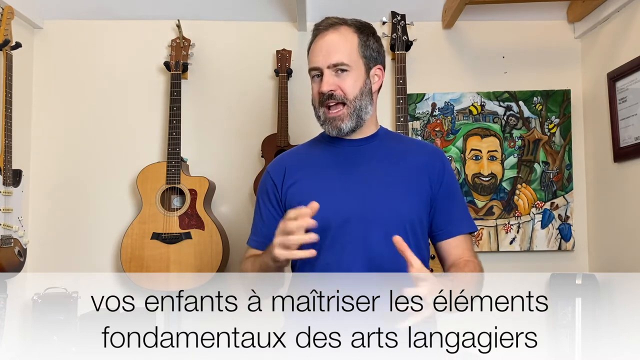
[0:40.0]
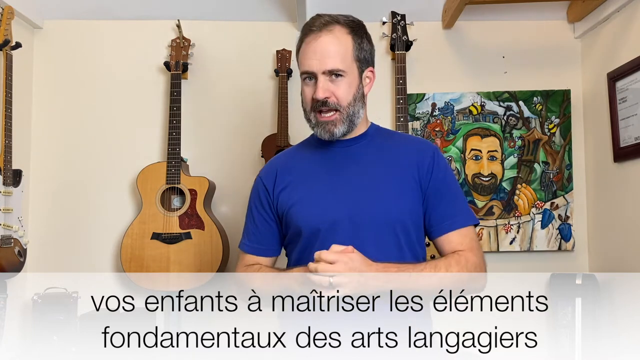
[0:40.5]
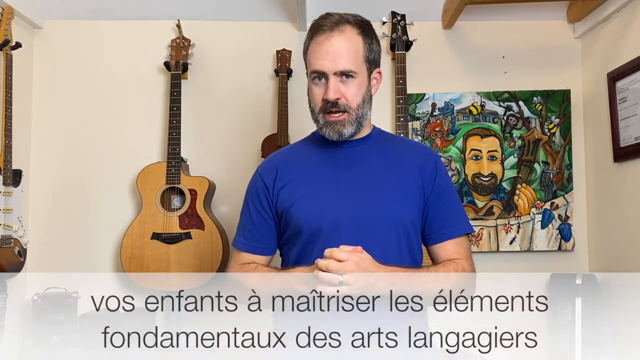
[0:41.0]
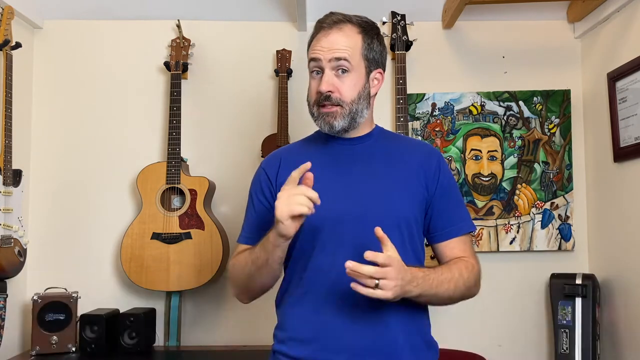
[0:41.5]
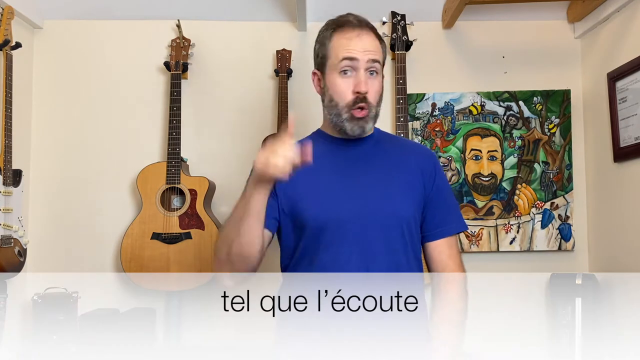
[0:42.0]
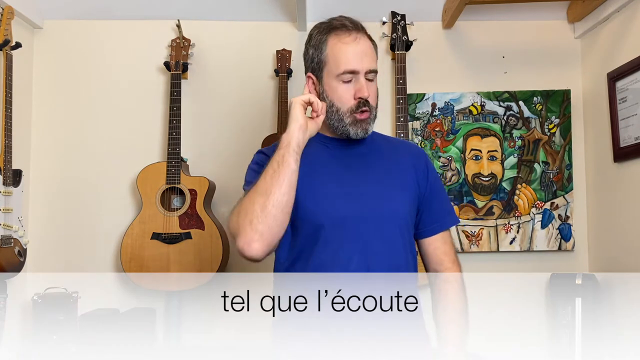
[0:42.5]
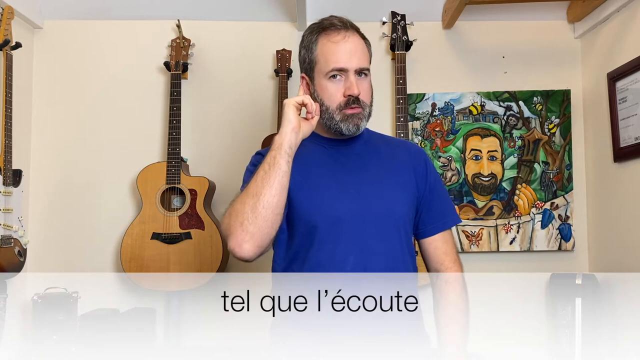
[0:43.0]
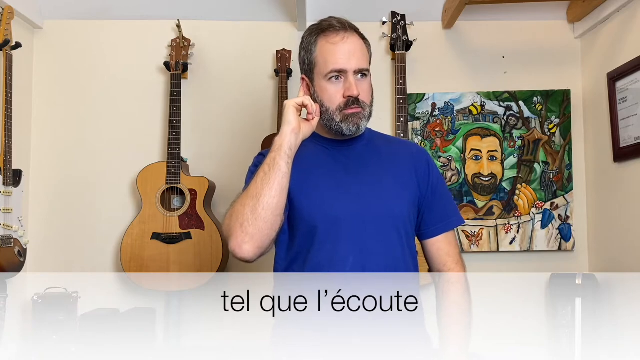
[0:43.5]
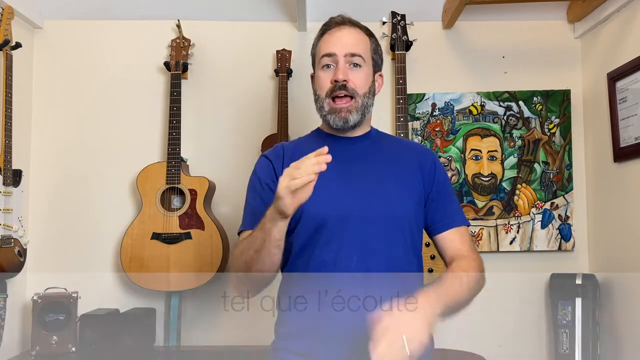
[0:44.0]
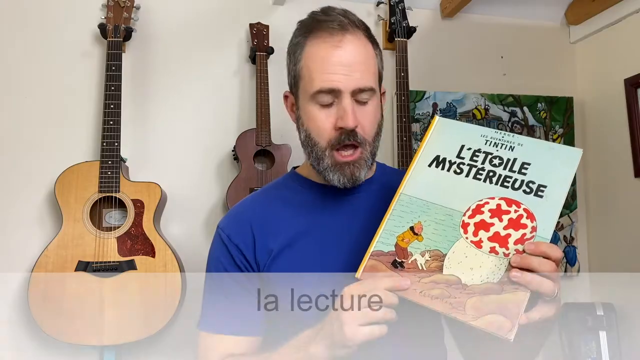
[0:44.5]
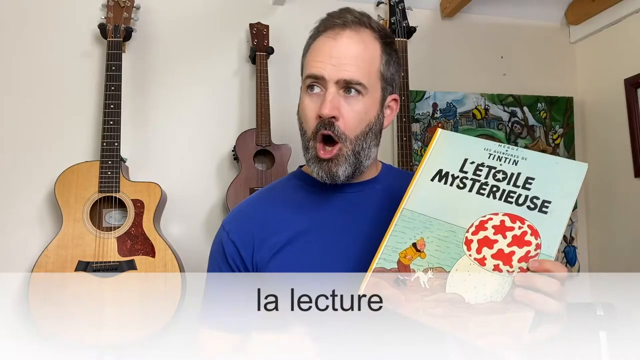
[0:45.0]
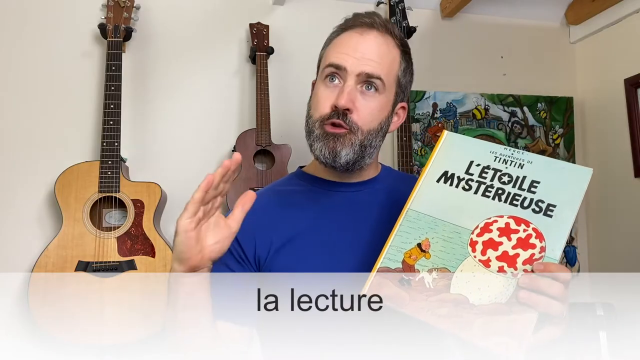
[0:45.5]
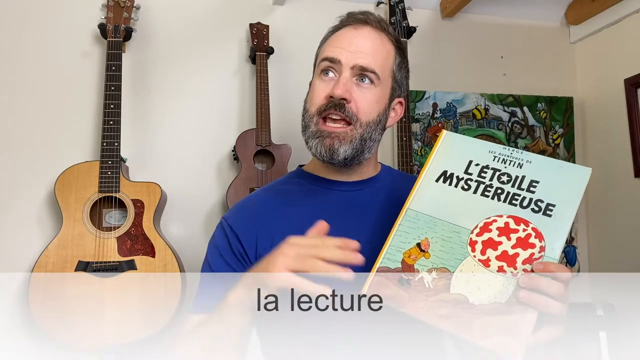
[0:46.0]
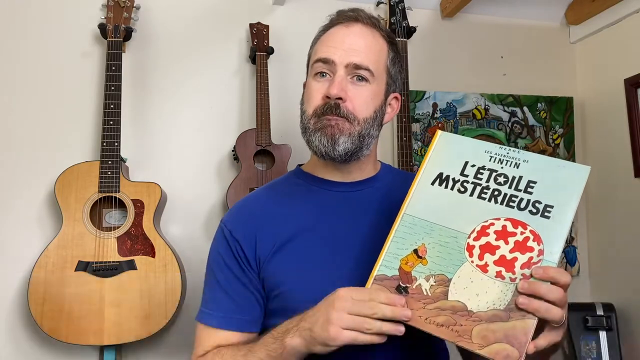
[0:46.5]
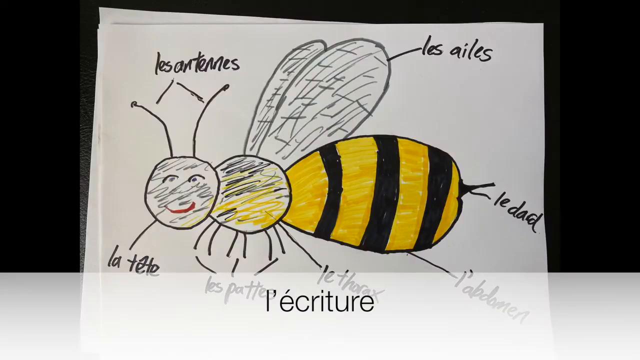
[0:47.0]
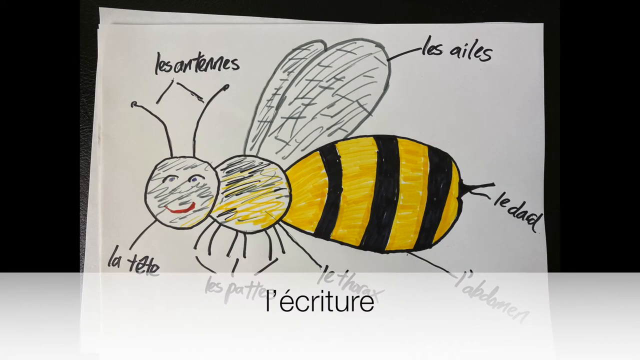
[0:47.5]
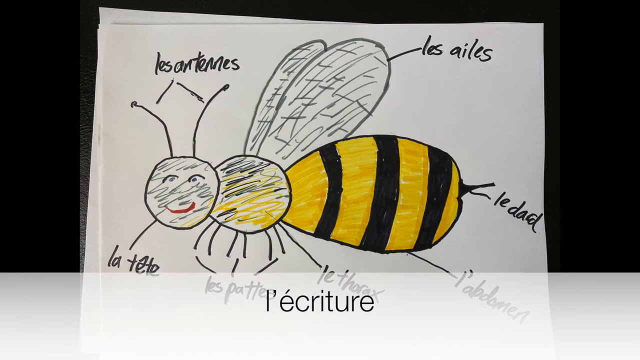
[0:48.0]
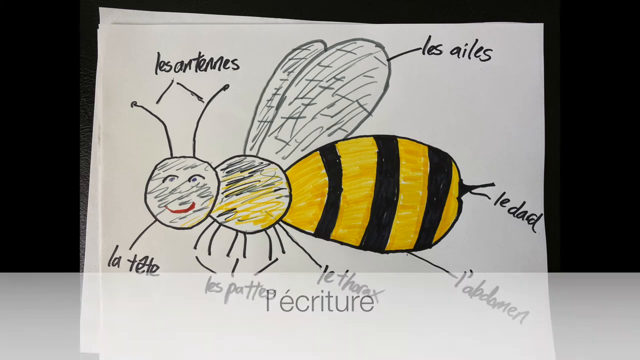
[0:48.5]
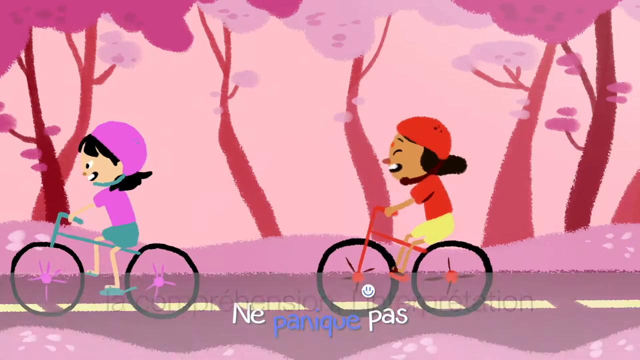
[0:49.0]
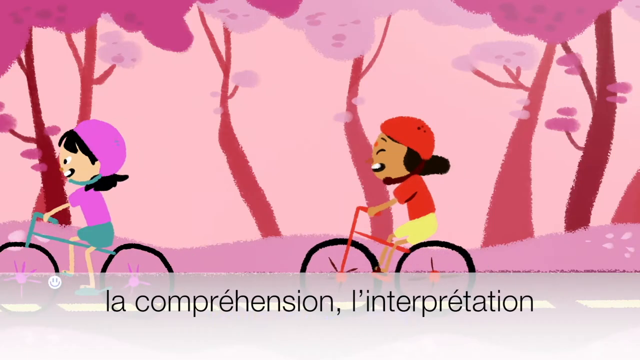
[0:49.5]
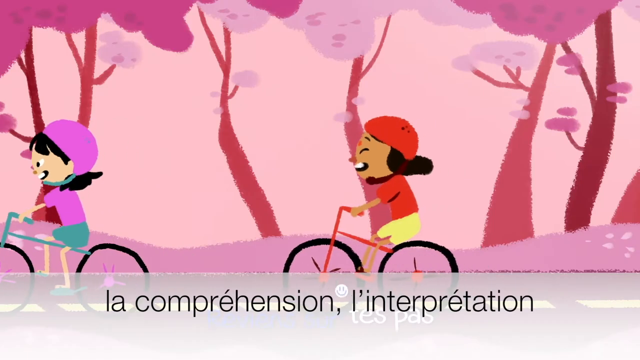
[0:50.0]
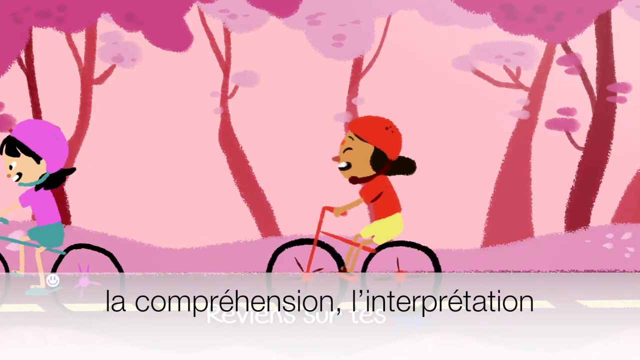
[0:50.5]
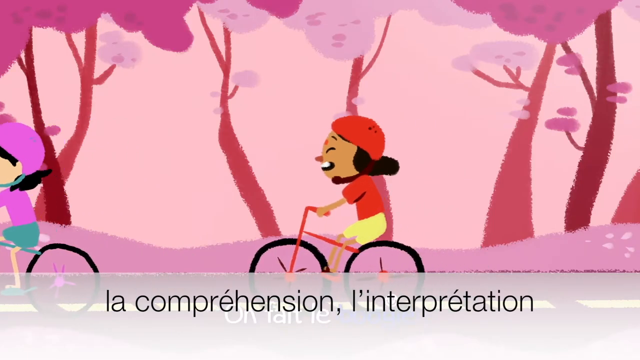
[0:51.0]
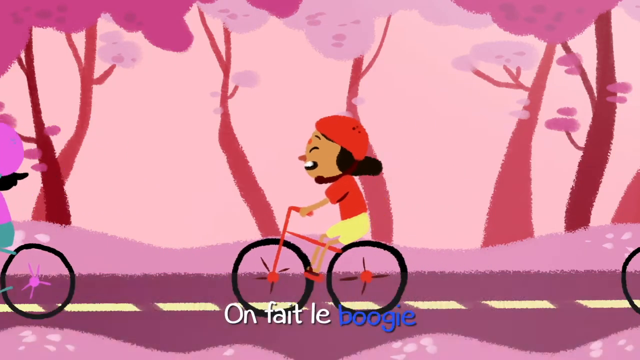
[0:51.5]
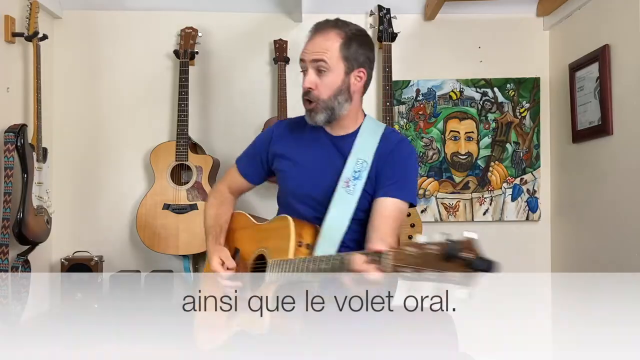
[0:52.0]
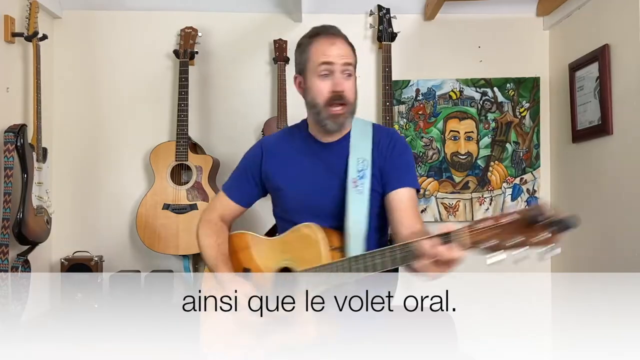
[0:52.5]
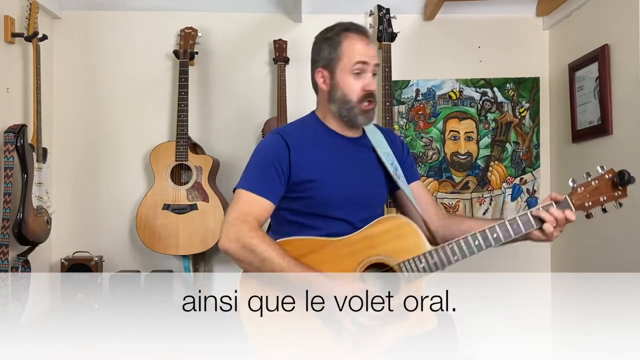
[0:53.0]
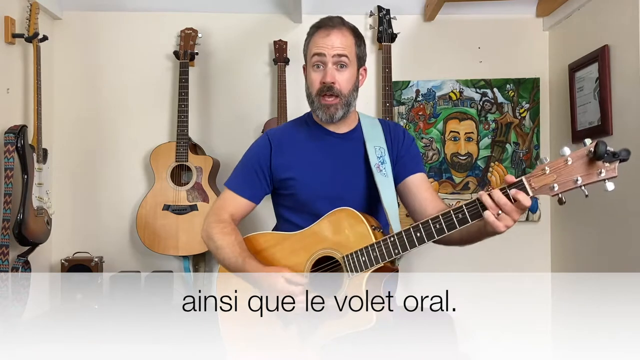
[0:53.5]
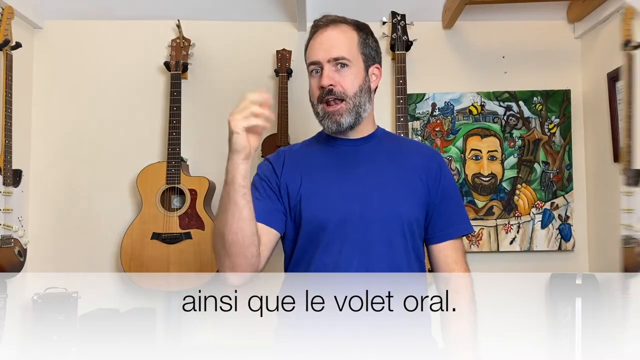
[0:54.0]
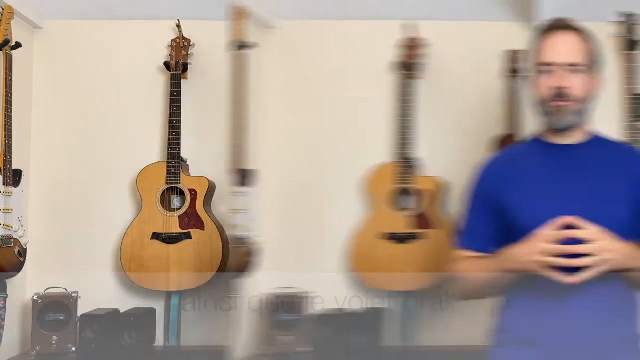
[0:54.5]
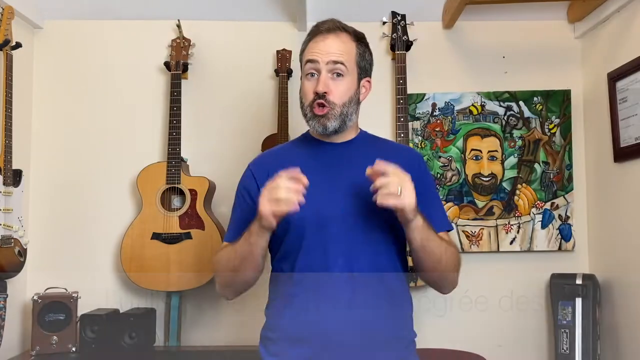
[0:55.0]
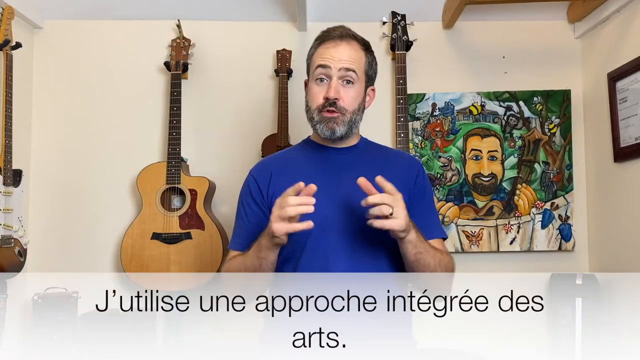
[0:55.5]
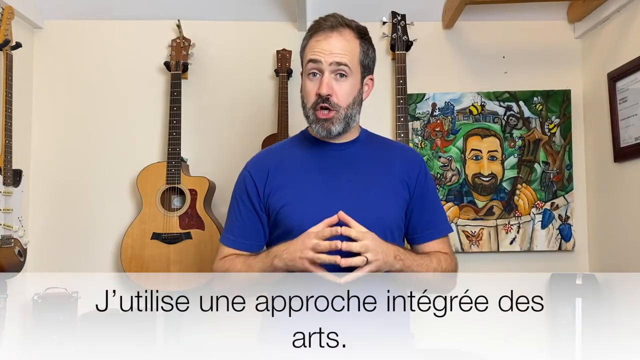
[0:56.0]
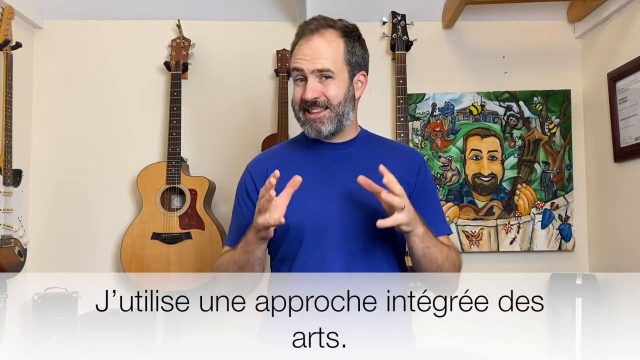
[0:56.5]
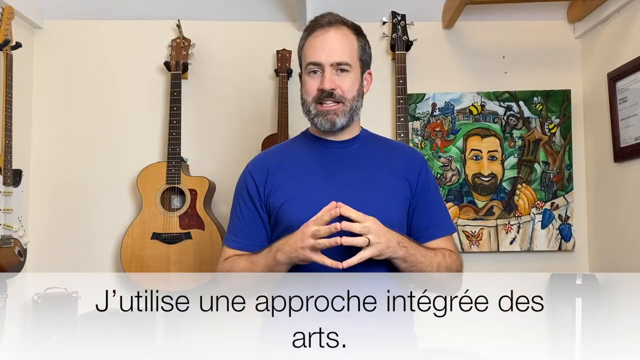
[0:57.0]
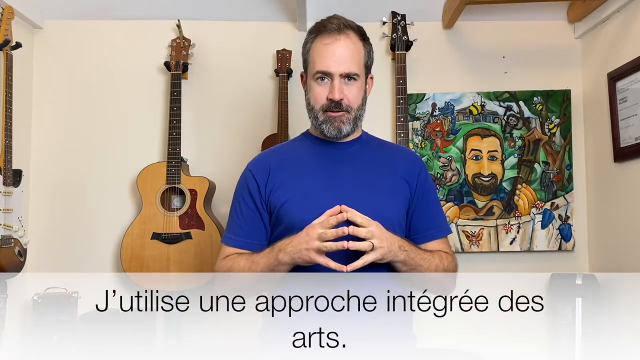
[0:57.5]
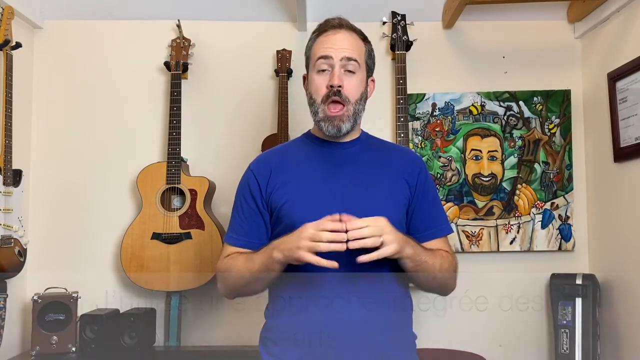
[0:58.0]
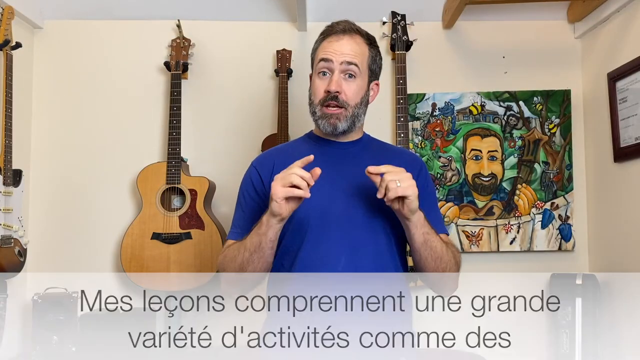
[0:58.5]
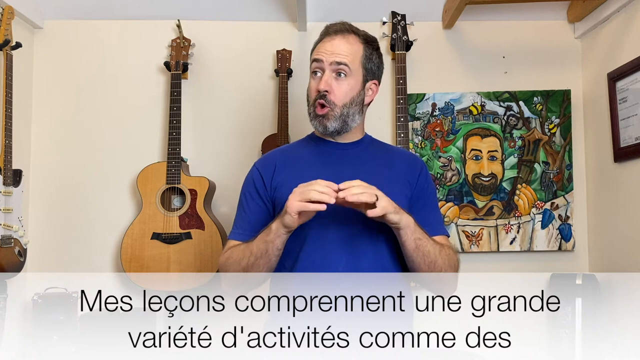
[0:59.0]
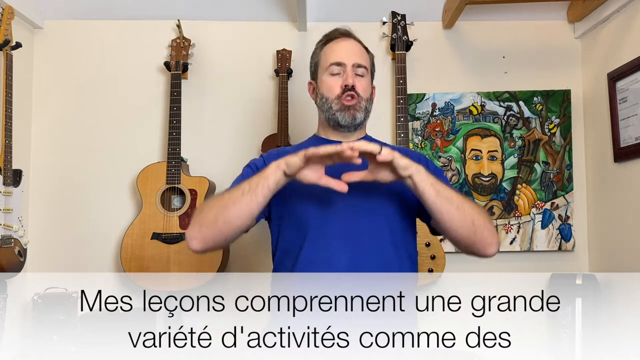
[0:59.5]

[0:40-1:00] A Caucasian man is in the center of the frame. He has dark hair and a dark beard with gray mixed in, and is probably in his early 40s. He talks to the camera, to someone off camera, or to his audience through the camera. As he talks, he points his right finger at the camera and then raises that finger up to his right ear. Behind him are a white back wall and two side walls; the room looks rather small, as the side walls are not far from him and the back wall is maybe a foot or two behind him. Guitars are on the walls: a brown and white electric guitar on the far left against the left side wall, a light tan or brown acoustic guitar with darker brown accents on the back wall behind him, and two other guitars behind him of which only the bridges are visible. Black text at the bottom of the screen reads "TEL QUE L'ECOUTE".